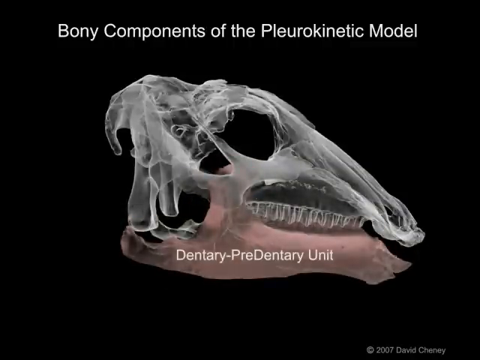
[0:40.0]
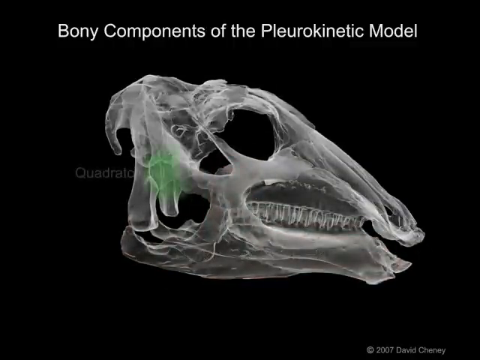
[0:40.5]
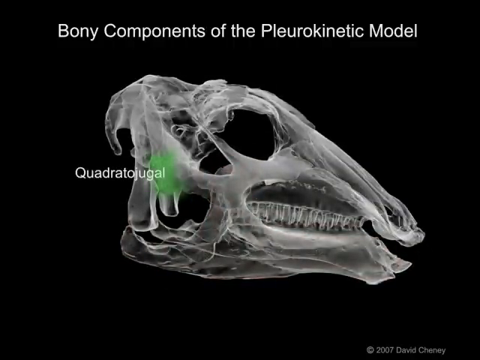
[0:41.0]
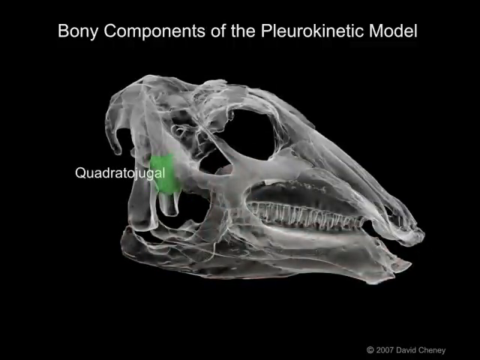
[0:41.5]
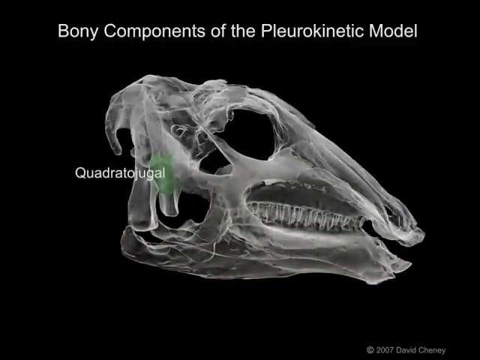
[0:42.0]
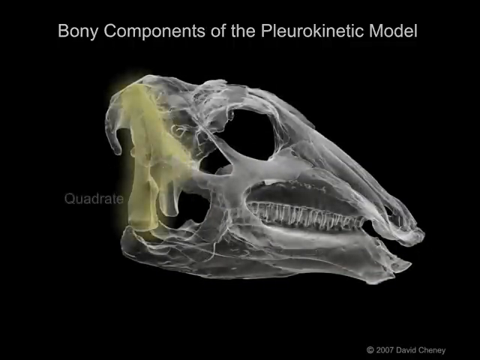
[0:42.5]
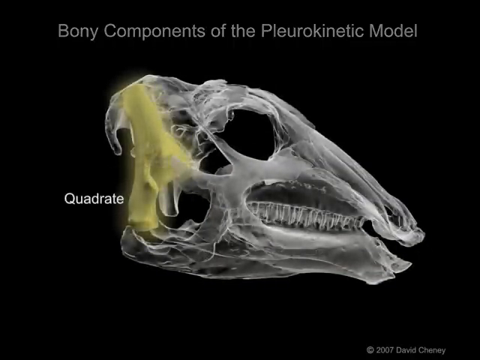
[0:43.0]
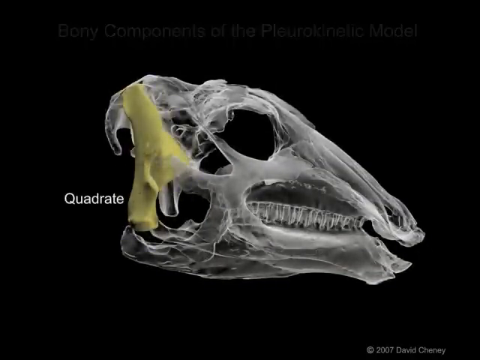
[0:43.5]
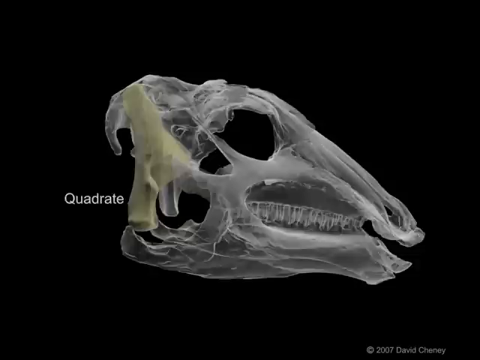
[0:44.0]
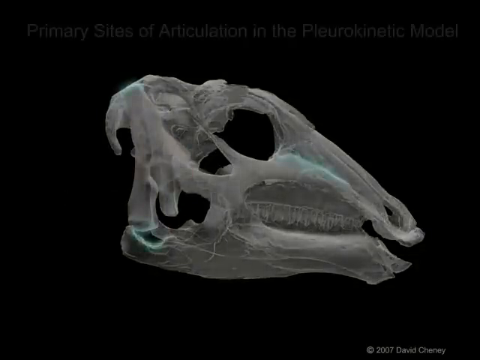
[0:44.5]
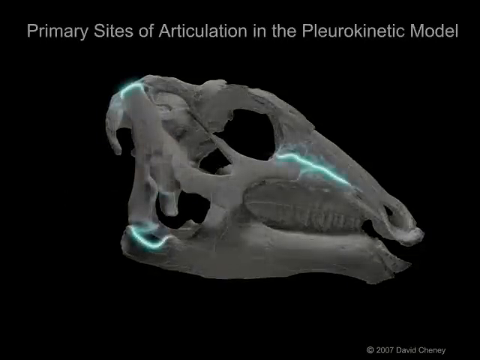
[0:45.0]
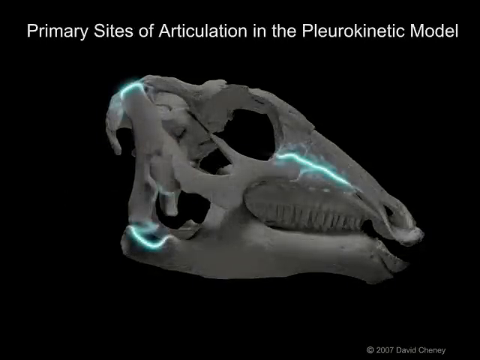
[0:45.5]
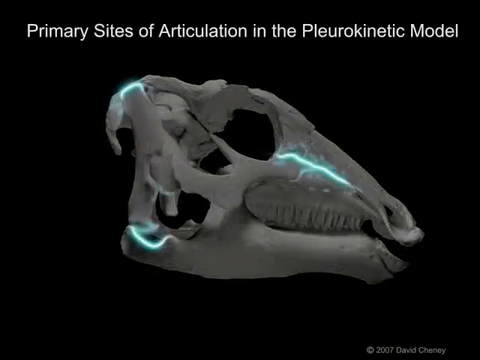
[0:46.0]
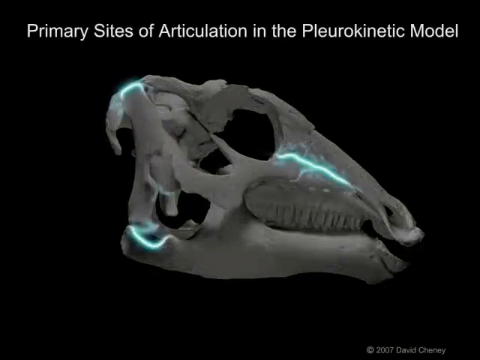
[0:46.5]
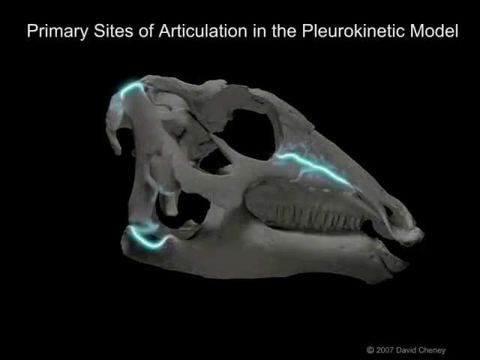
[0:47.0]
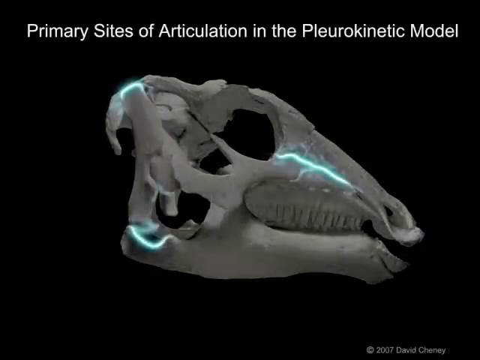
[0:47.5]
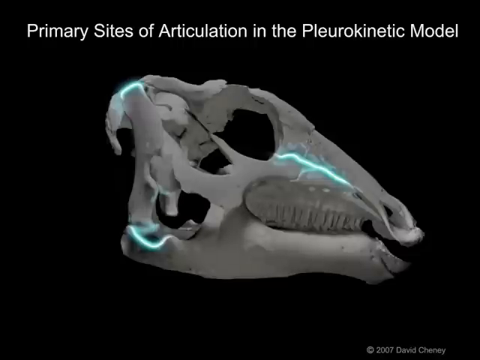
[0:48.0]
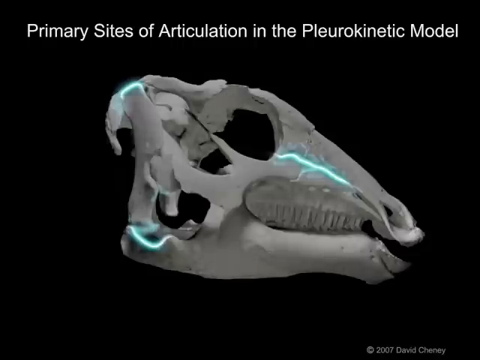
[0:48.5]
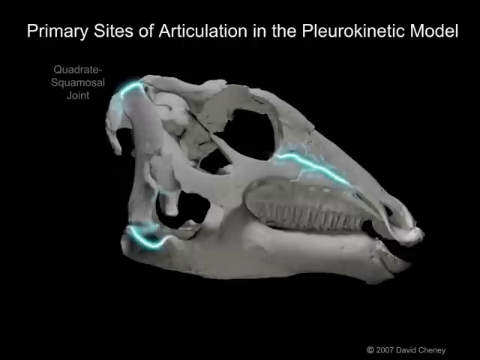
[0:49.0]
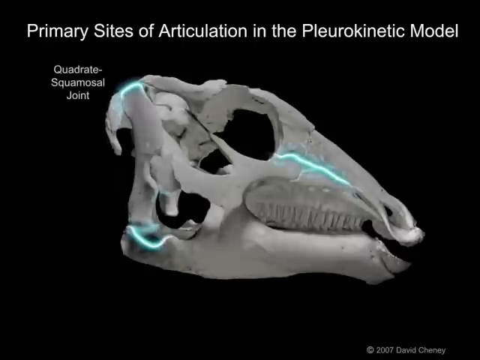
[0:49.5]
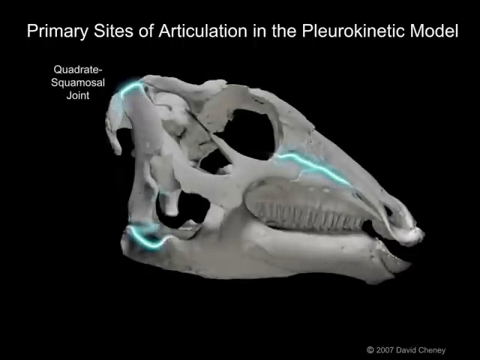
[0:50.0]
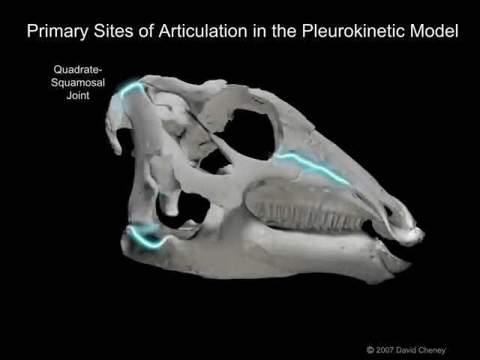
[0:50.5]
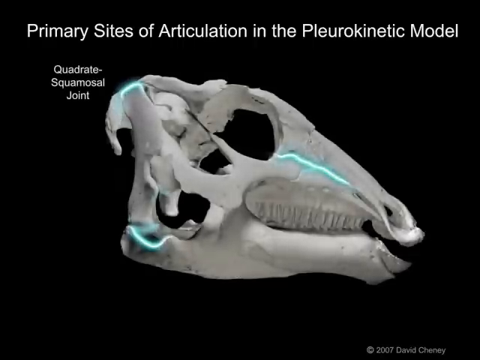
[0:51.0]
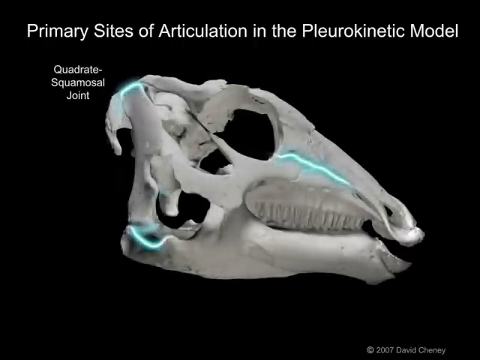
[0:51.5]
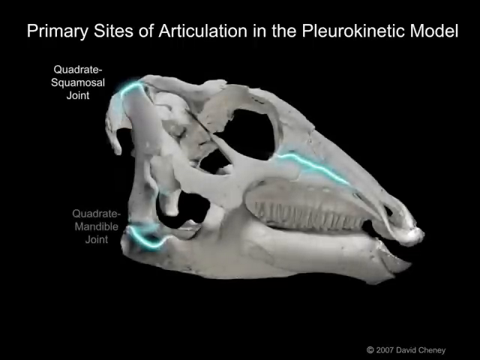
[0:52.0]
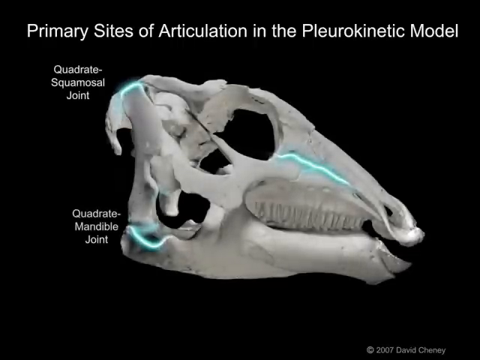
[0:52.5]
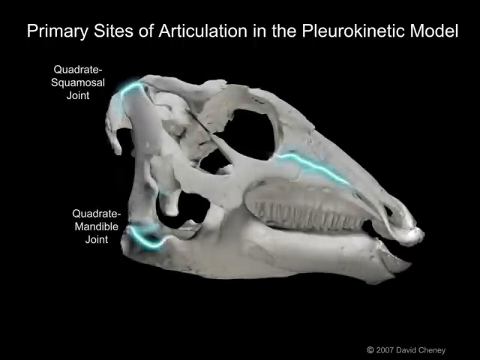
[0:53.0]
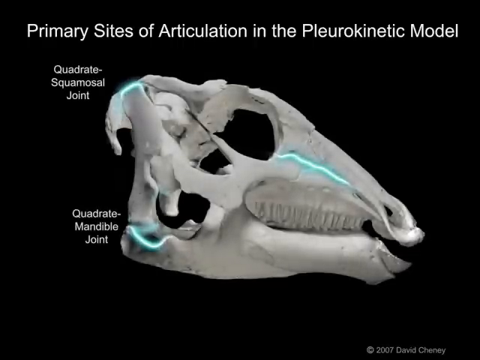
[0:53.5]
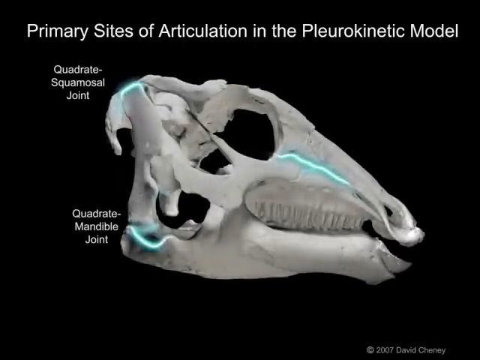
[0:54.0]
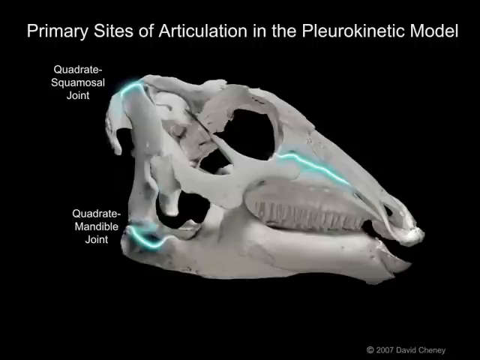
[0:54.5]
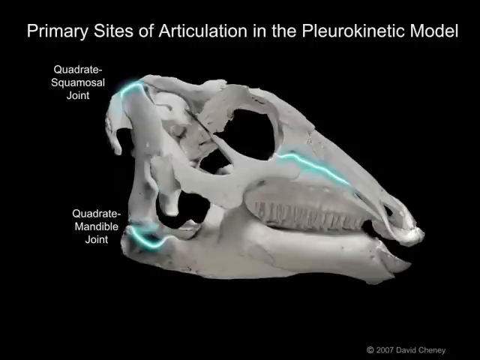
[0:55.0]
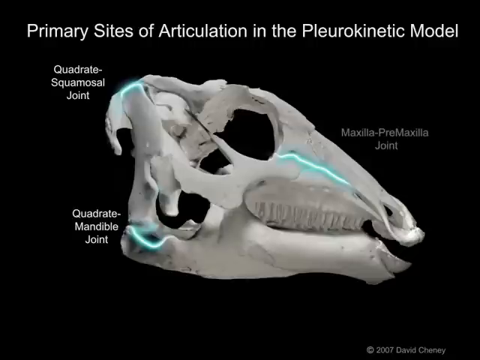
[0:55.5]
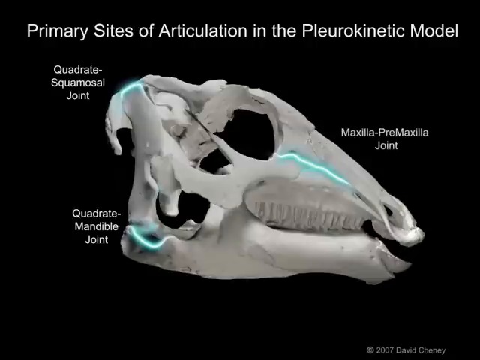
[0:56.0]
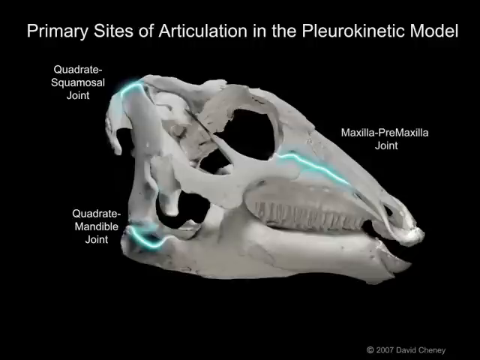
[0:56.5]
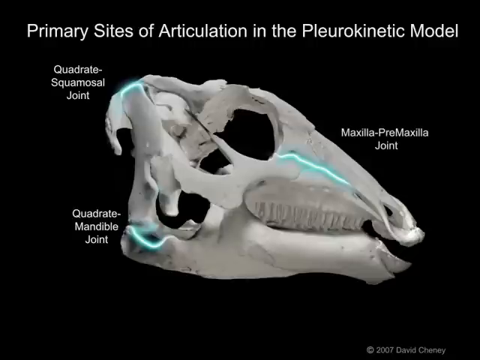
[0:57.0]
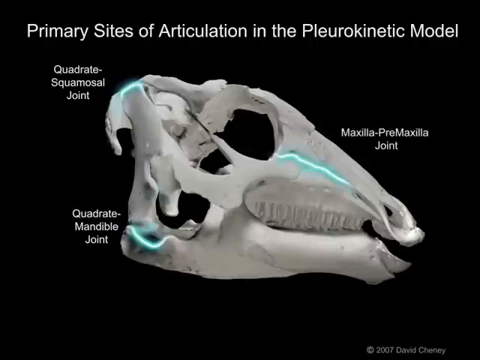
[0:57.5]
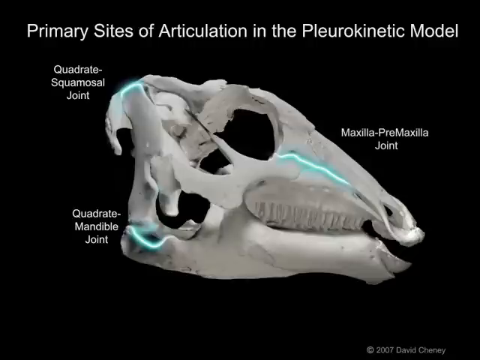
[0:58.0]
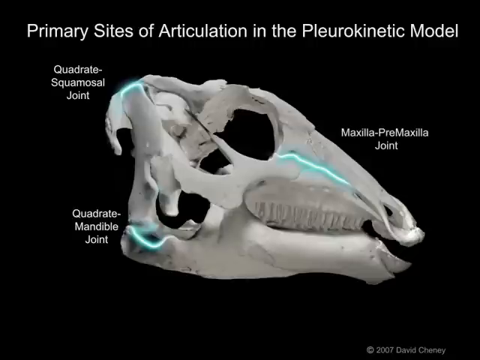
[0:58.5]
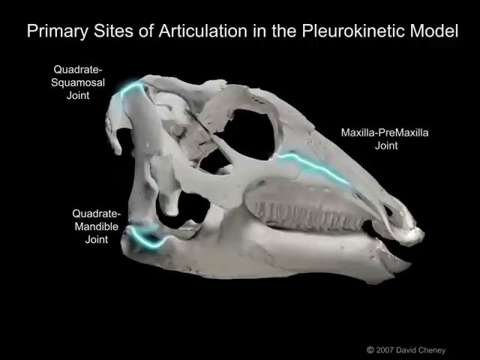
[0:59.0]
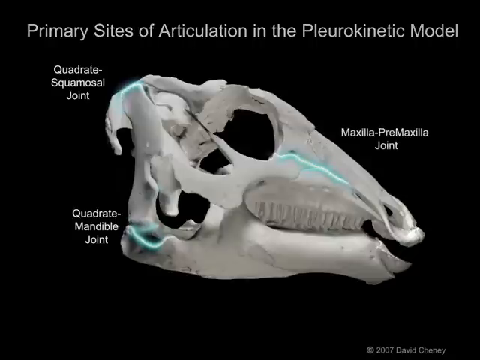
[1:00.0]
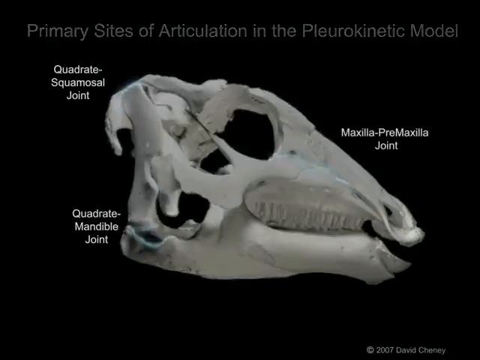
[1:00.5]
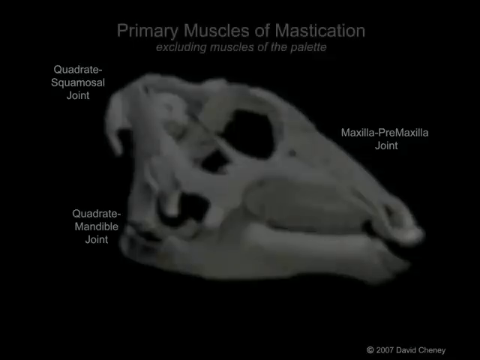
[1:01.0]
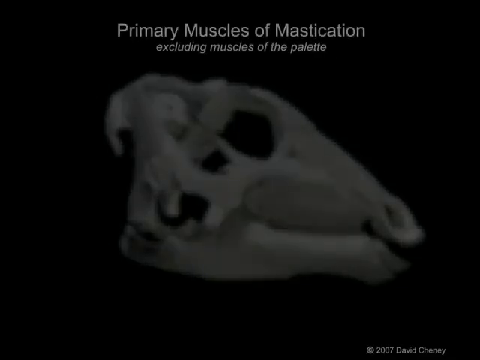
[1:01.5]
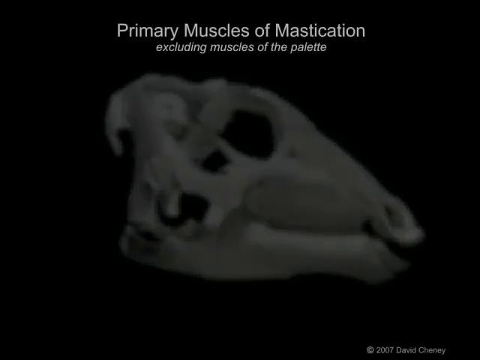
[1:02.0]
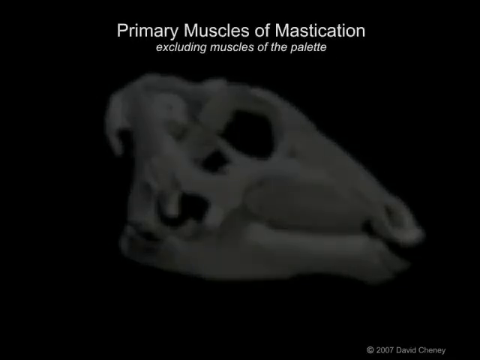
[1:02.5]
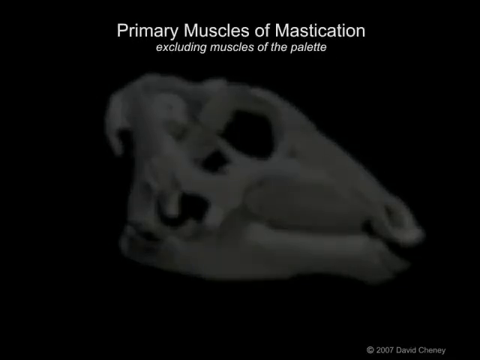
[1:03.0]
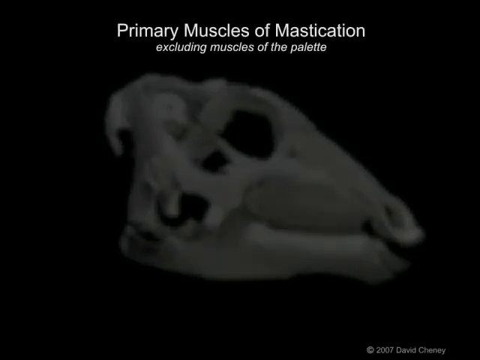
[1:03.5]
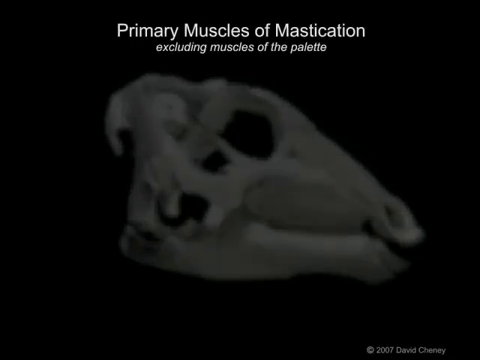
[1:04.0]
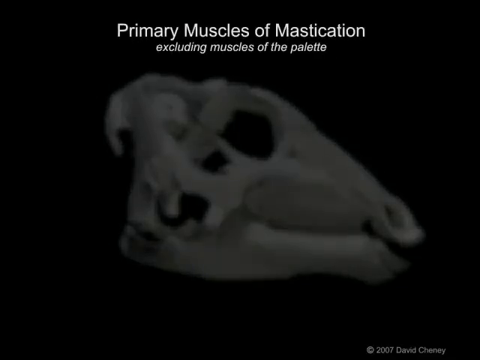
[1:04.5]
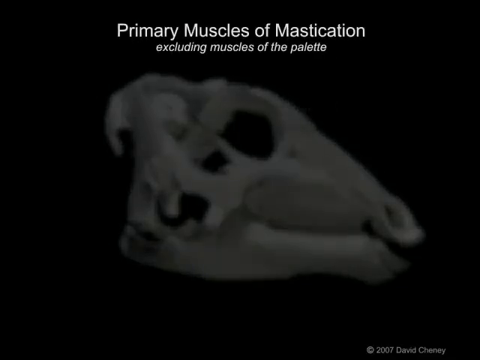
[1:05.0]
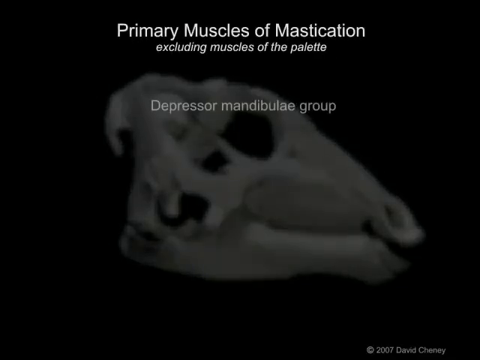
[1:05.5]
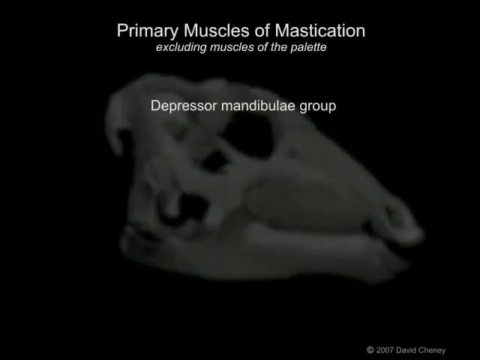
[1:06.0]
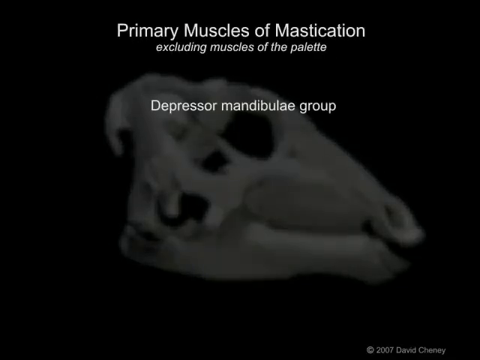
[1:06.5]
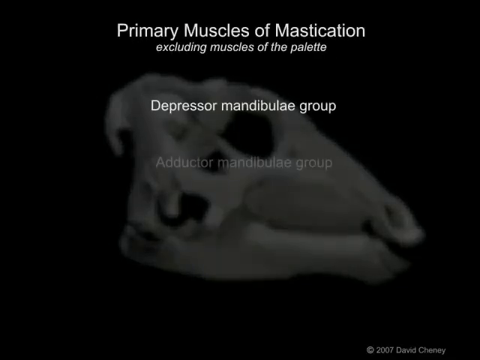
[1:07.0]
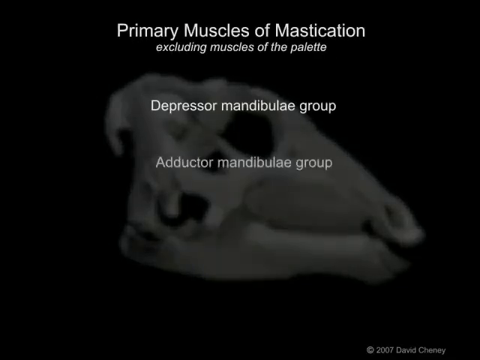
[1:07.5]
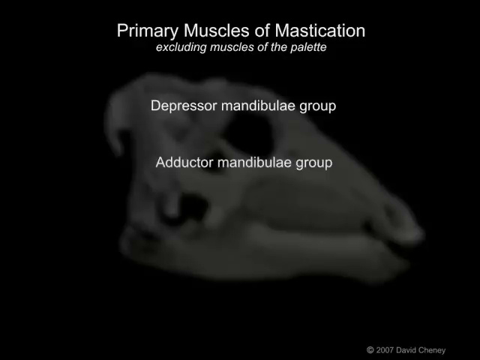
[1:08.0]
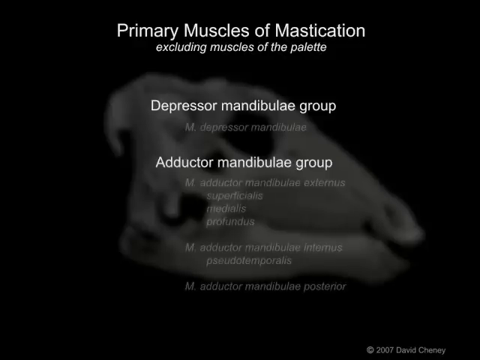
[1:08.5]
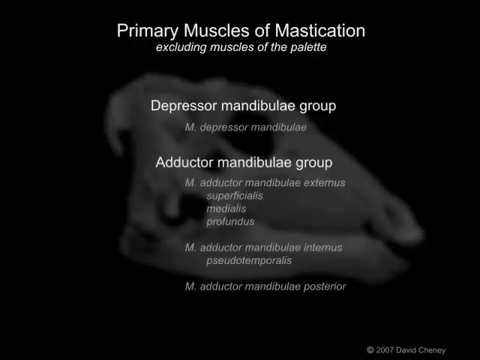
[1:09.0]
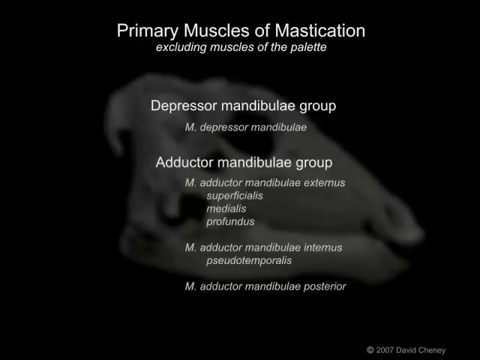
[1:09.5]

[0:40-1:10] Against a black background, the title reads "bony components of the pleurokinetic model." The dinosaur head faces right in a right side profile view, and the bottom part of the skull, including the bottom of the jaw, is red and labeled "dentary-predentary unit." Another part toward the back is highlighted green and labeled "quadratojugal." That fades away, and another part is highlighted yellow and labeled "quadrate." The title then changes to "primary sites of articulation in the pleurokinetic model." Two areas and then three are highlighted light blue. At the upper left a label reads "quadrate-squamosal joint," and at the lower left another reads "quadrate-mandible joint." Another label begins with "maxilla" and appears to continue with "premaxilla."